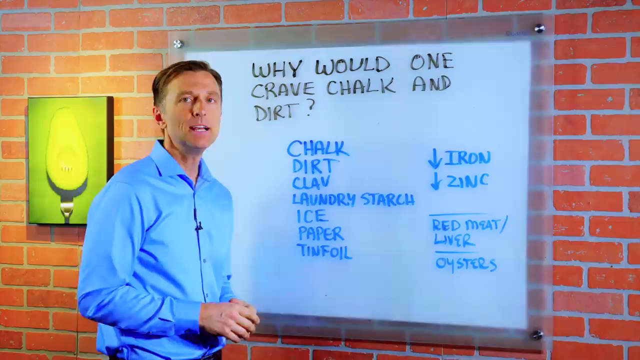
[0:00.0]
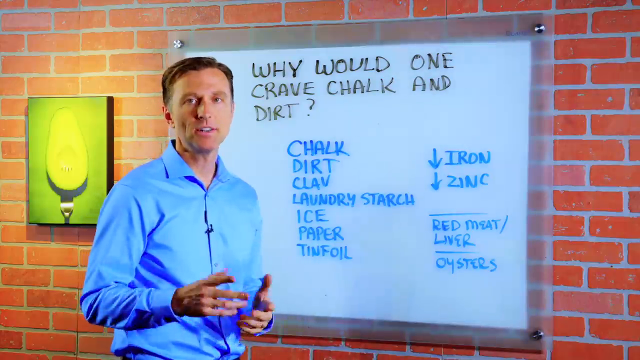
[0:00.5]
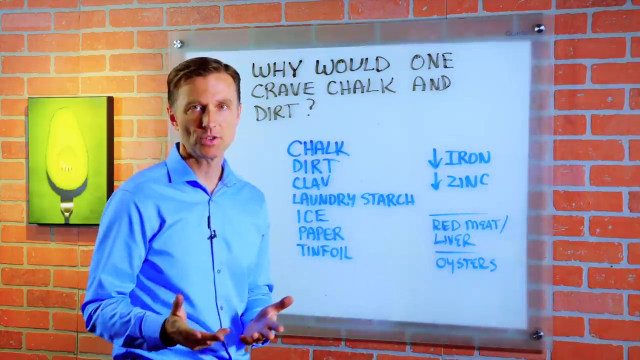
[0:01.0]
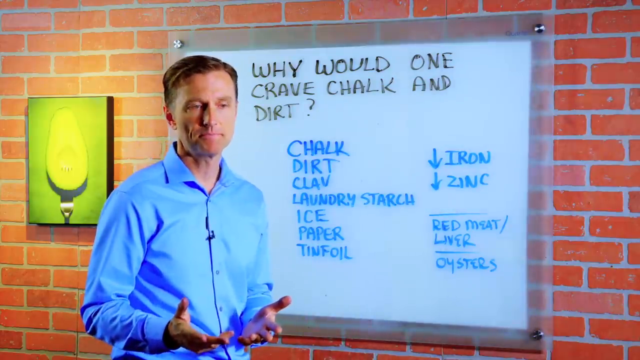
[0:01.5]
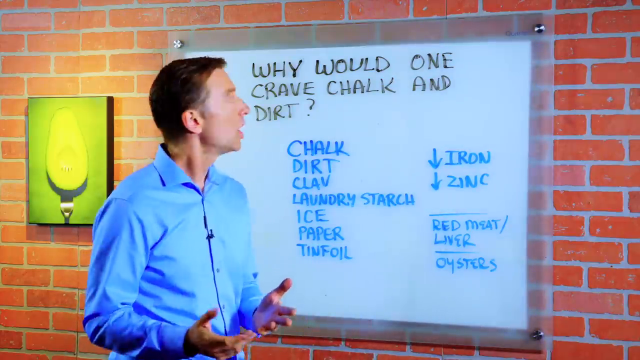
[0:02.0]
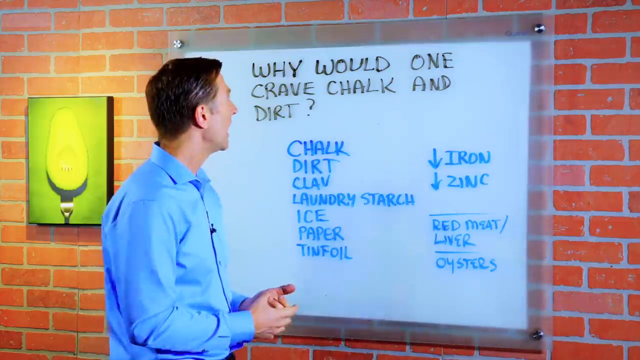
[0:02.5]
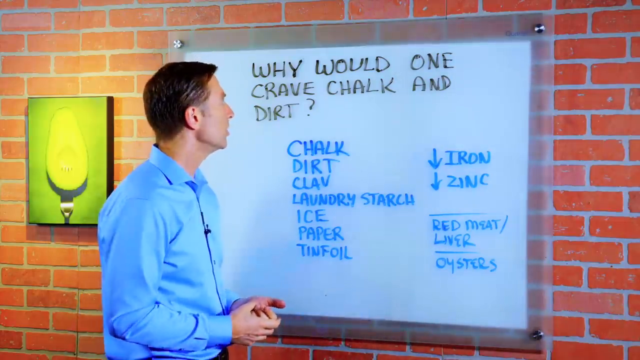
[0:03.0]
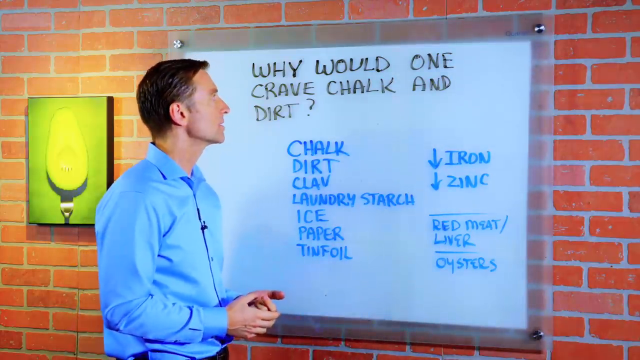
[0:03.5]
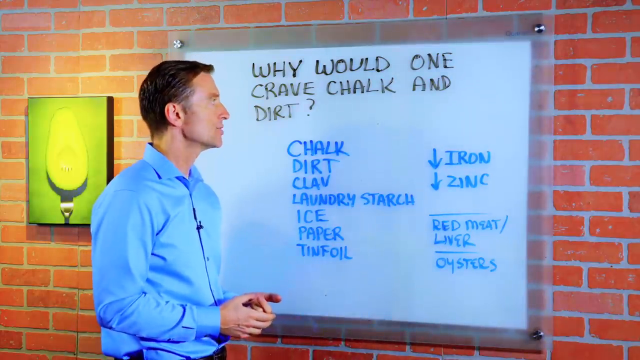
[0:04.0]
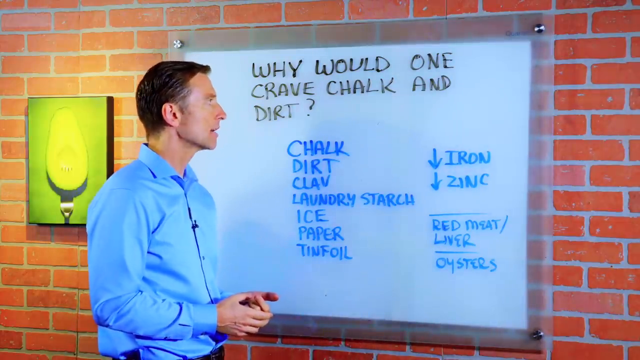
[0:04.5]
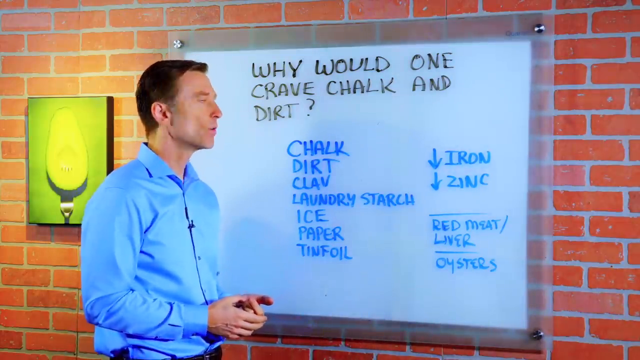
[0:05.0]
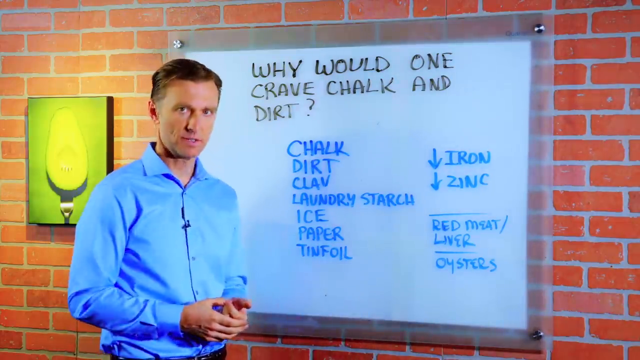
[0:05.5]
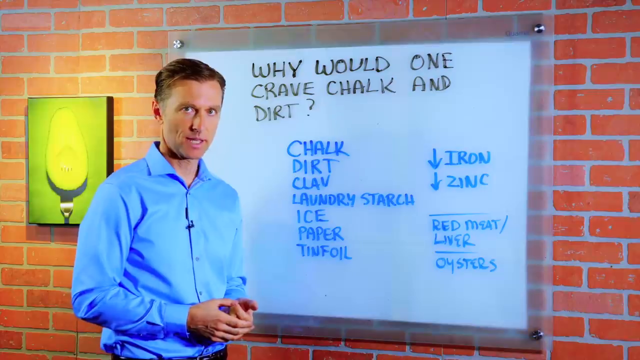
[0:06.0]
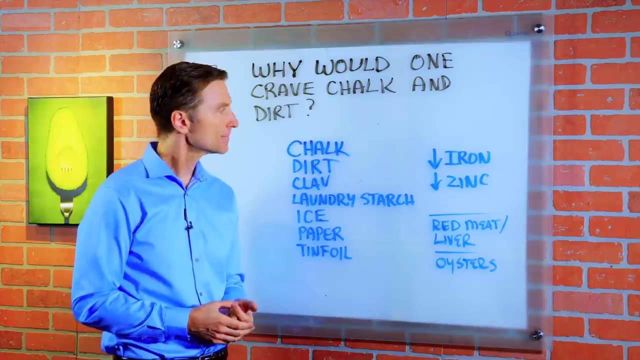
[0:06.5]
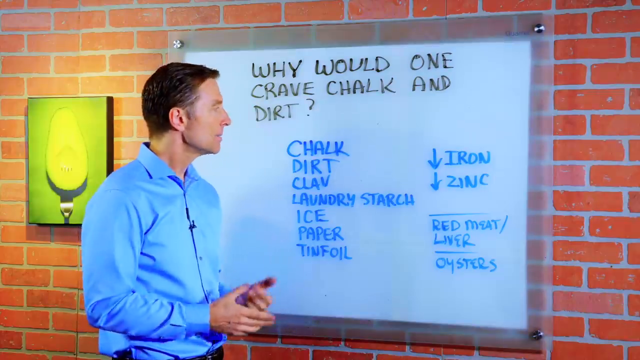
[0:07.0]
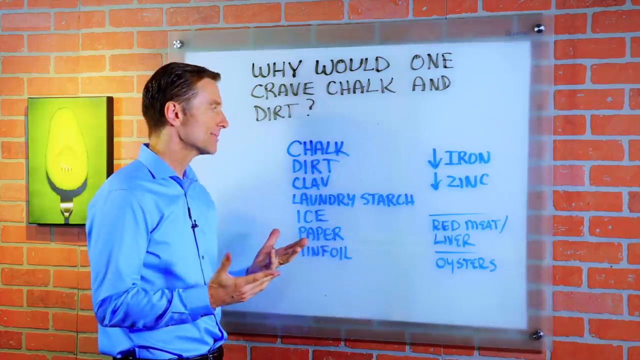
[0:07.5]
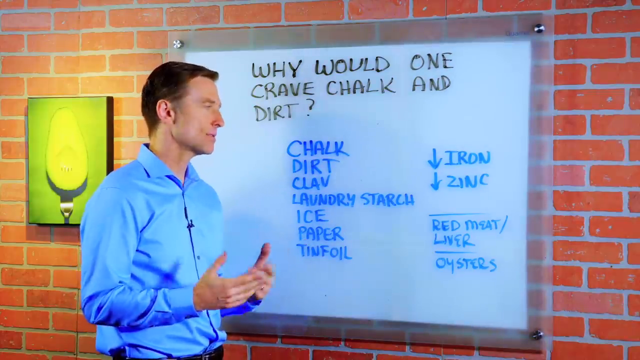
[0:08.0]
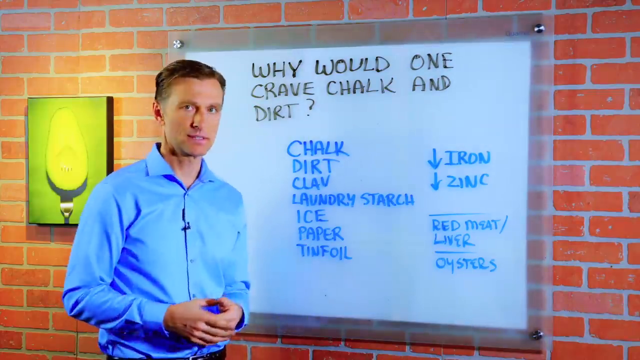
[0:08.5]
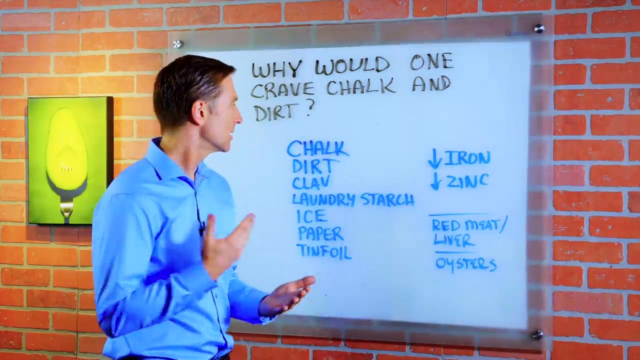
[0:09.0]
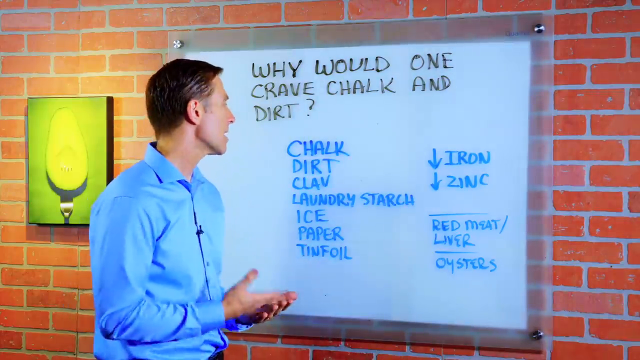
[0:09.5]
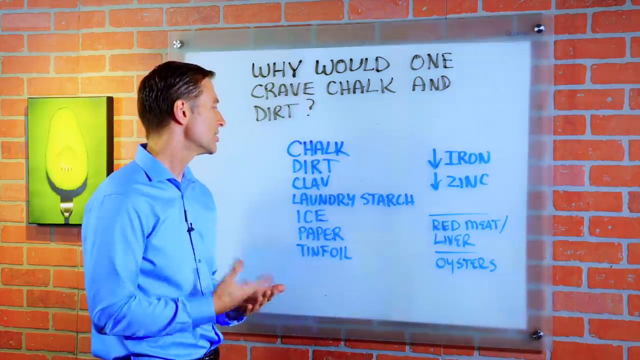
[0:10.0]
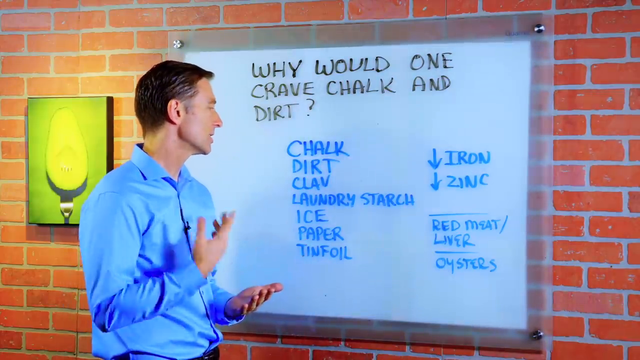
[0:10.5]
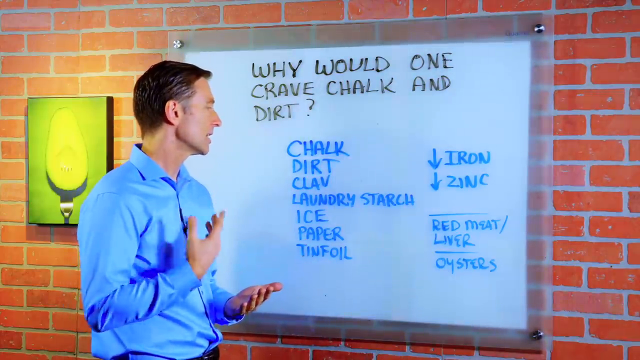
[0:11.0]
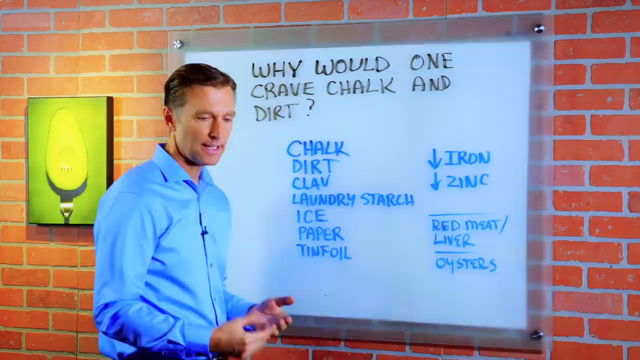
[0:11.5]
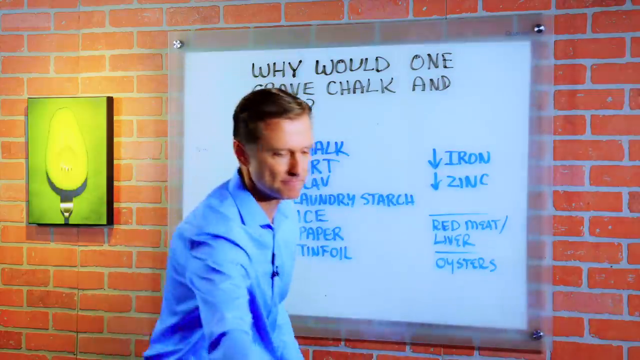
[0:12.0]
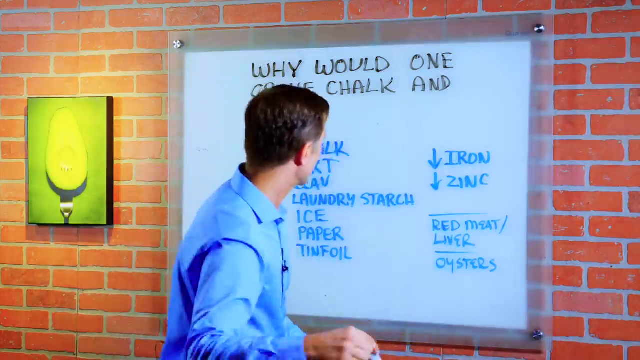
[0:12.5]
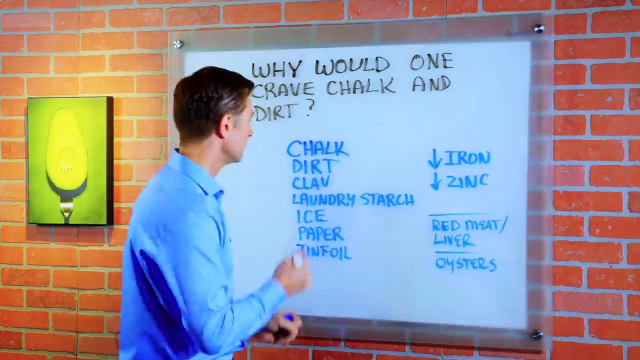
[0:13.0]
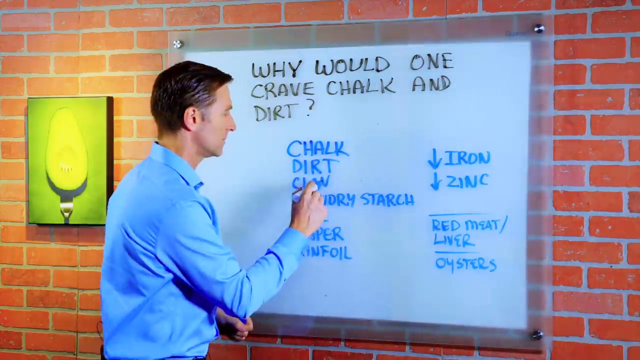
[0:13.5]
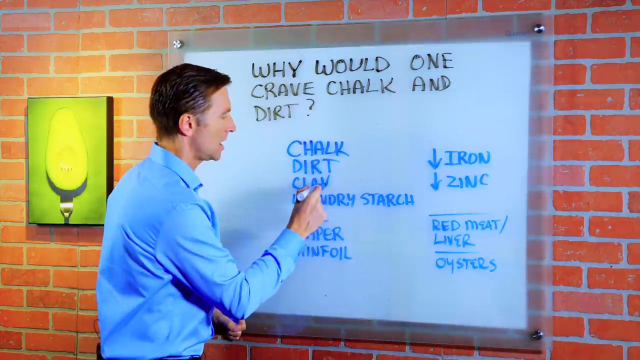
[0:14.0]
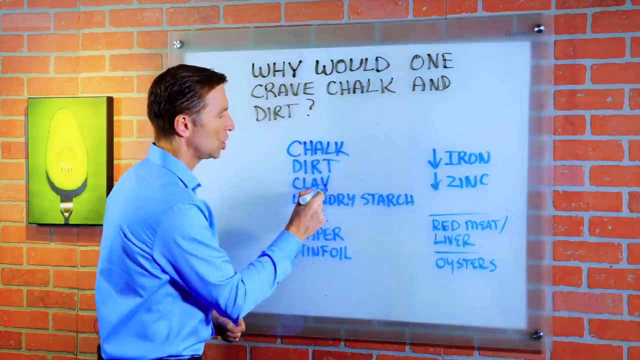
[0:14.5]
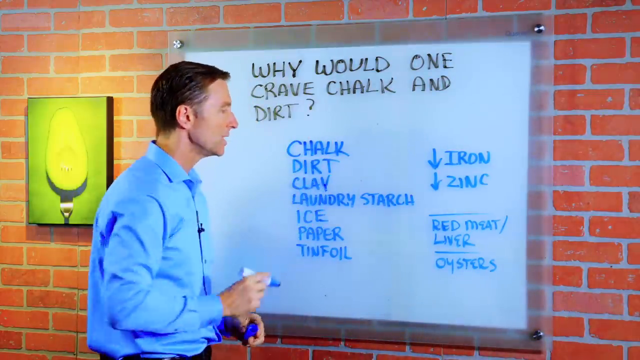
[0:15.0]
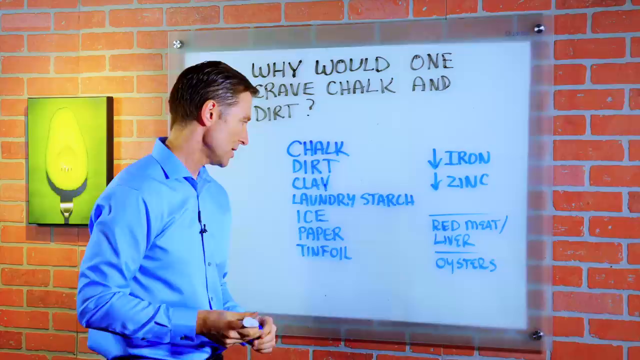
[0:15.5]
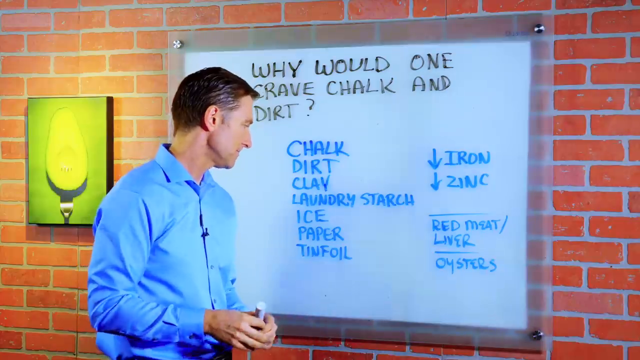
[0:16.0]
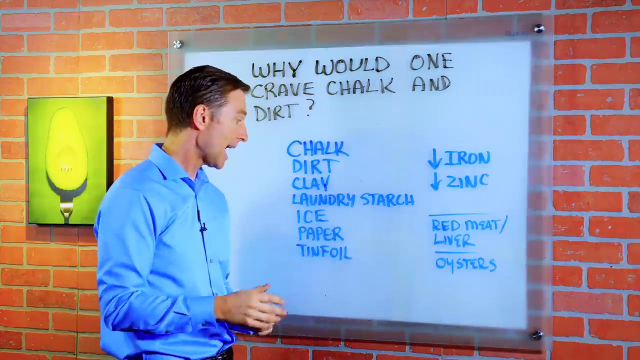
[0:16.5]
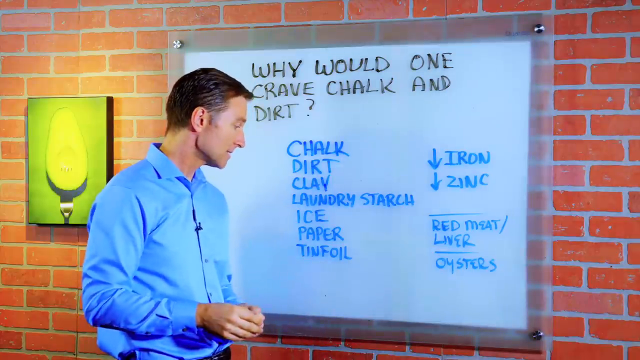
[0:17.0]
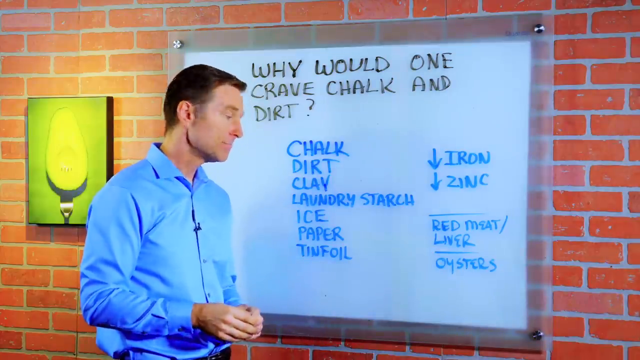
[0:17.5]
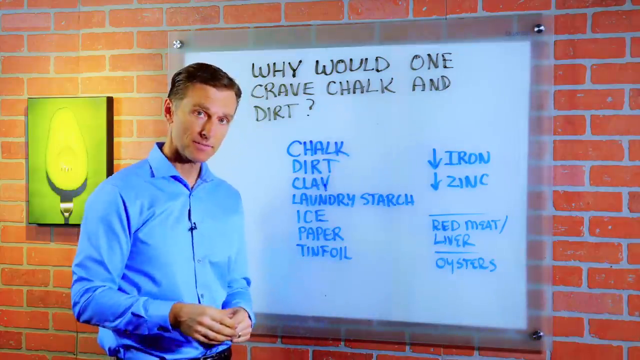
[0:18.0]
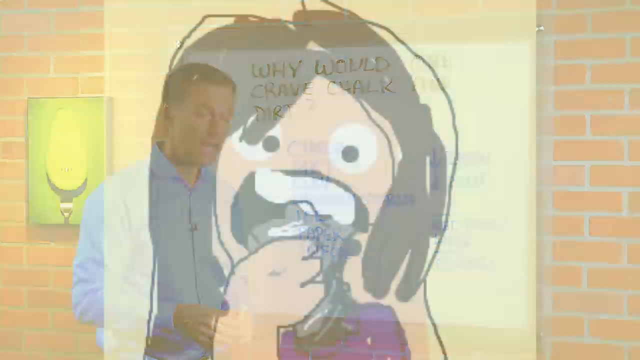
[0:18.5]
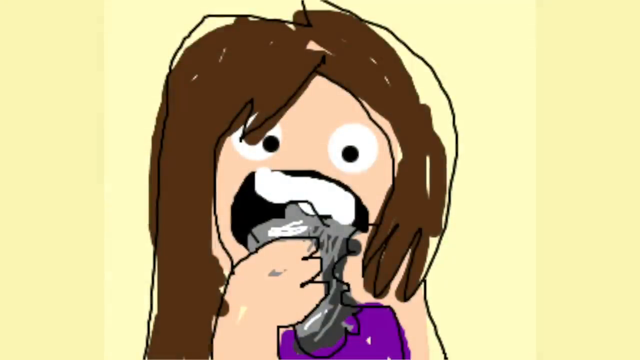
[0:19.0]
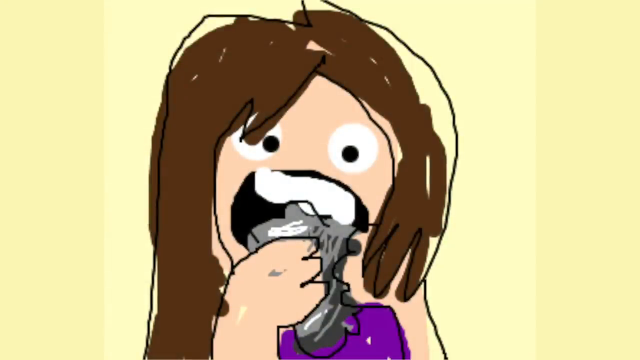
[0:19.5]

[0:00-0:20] A man wears a long-sleeve blue collared shirt with a small black microphone clipped to it. Behind him is a brick wall with a picture of an avocado, and directly behind him is a whiteboard. At the top of the whiteboard it says "Why would one crave chalk and dirt", and some things are listed in blue writing below that. The man speaks into the camera and also looks at the whiteboard behind him, apparently using his hands to convey what he is saying about the writing. Then what looks like a drawing pops up on the screen: it looks like someone eating something, with kind of crazy-looking hair, looking a little wild while doing so.